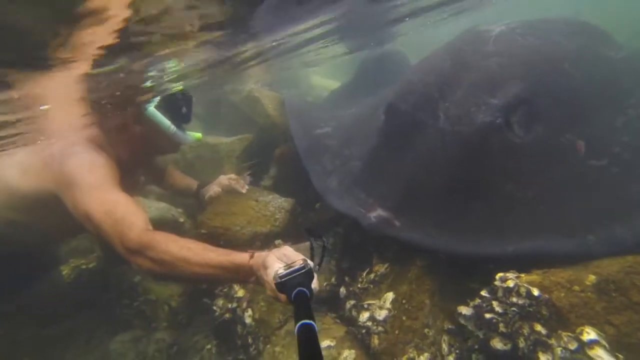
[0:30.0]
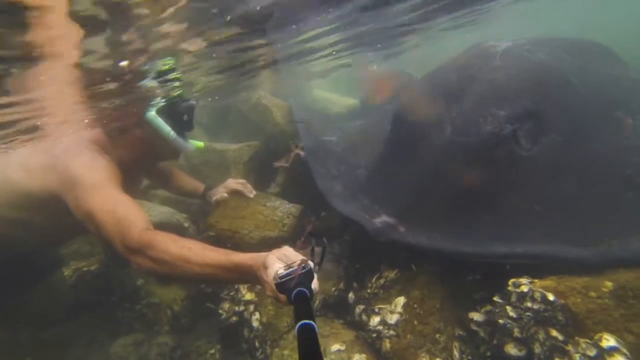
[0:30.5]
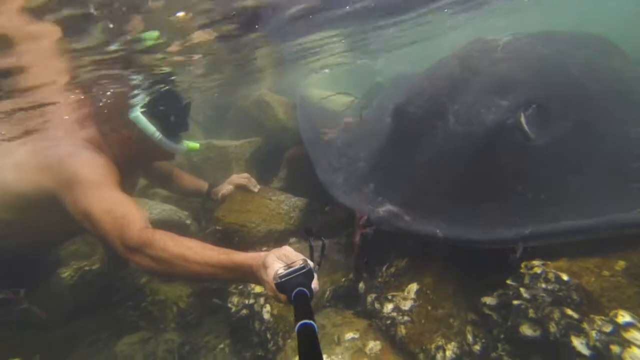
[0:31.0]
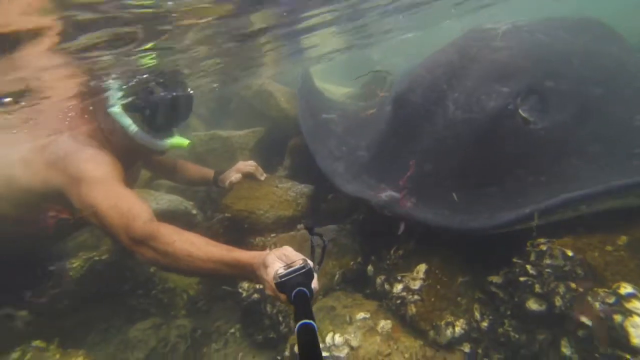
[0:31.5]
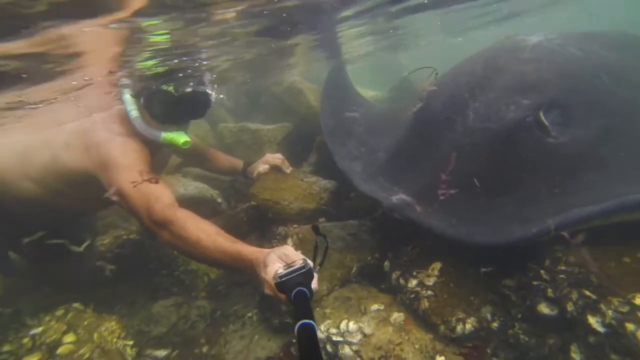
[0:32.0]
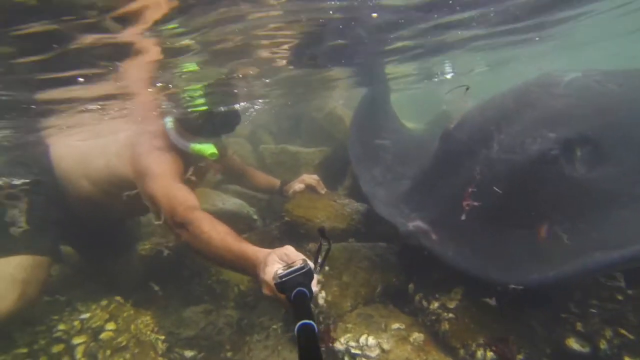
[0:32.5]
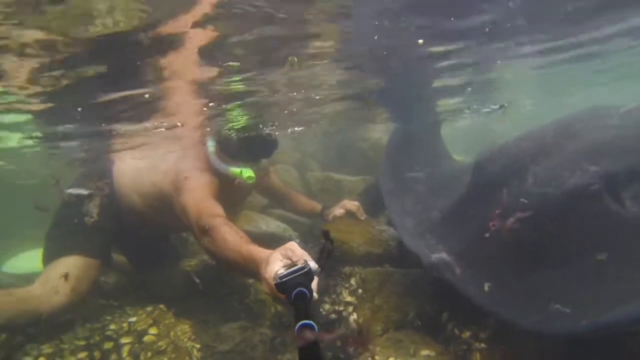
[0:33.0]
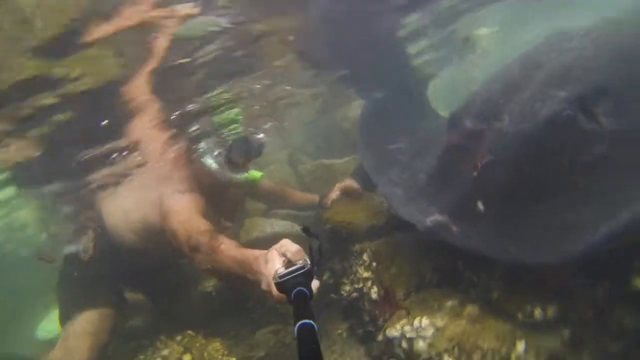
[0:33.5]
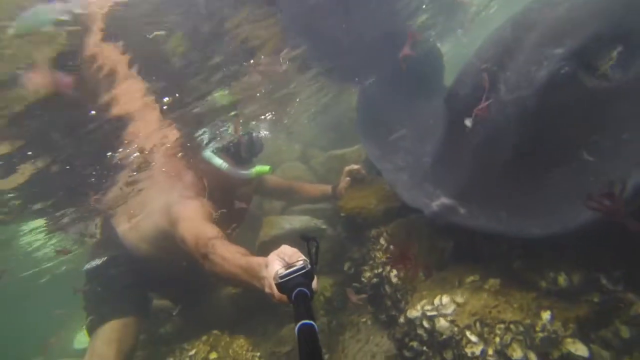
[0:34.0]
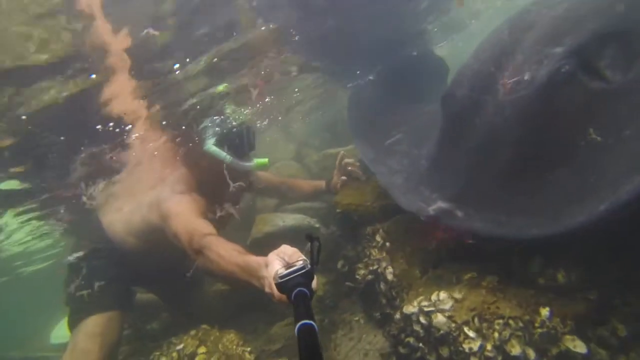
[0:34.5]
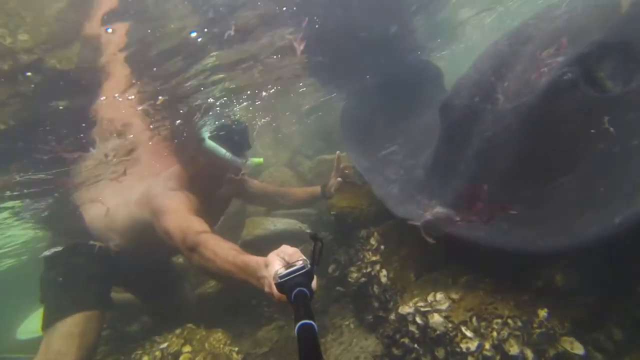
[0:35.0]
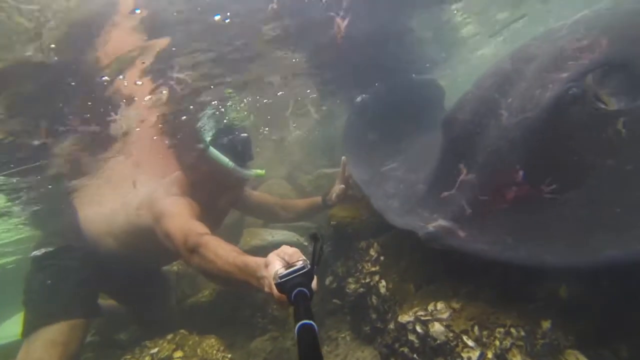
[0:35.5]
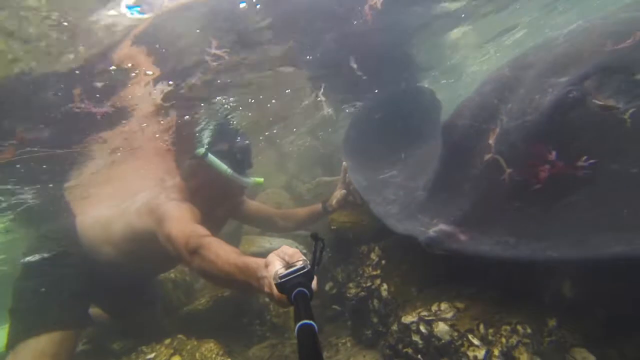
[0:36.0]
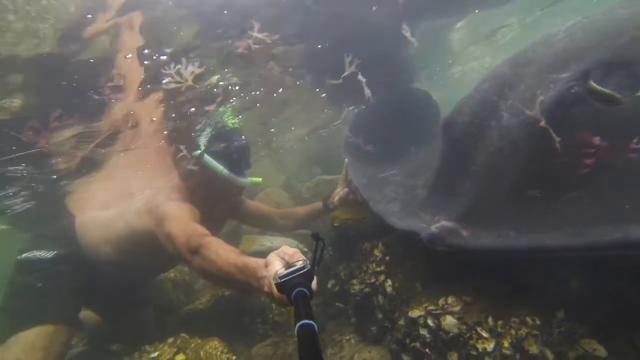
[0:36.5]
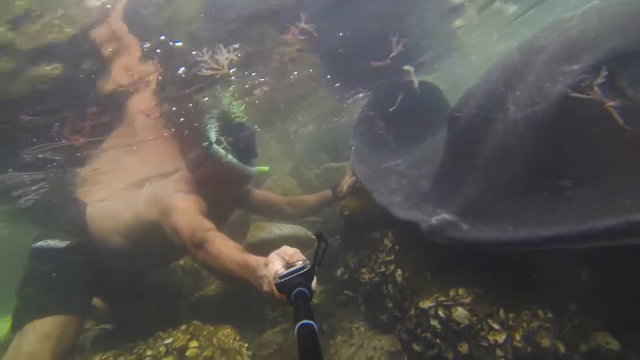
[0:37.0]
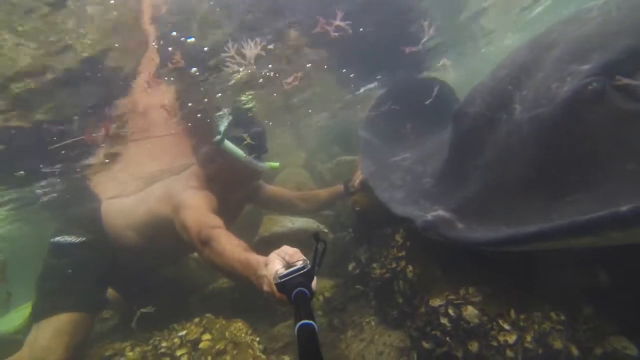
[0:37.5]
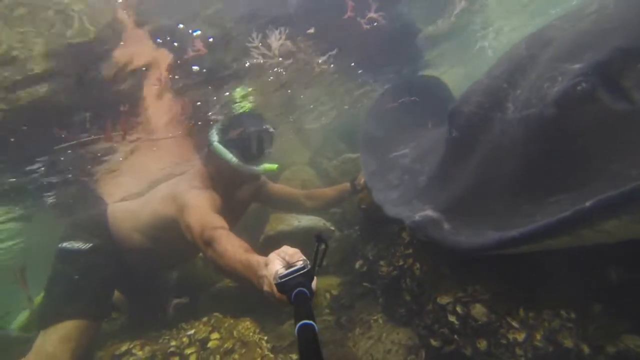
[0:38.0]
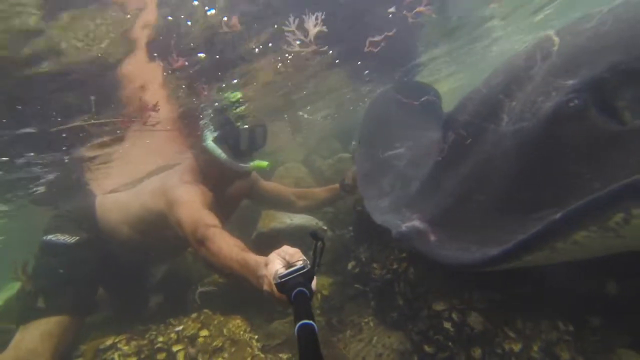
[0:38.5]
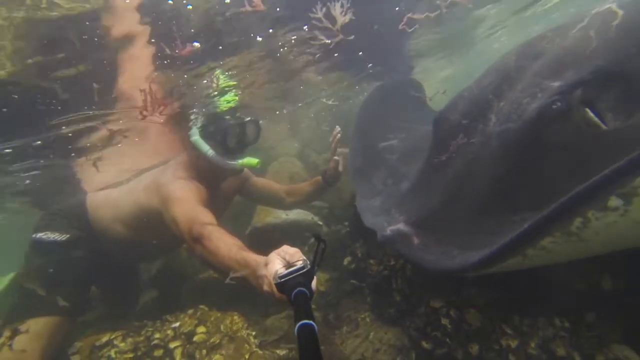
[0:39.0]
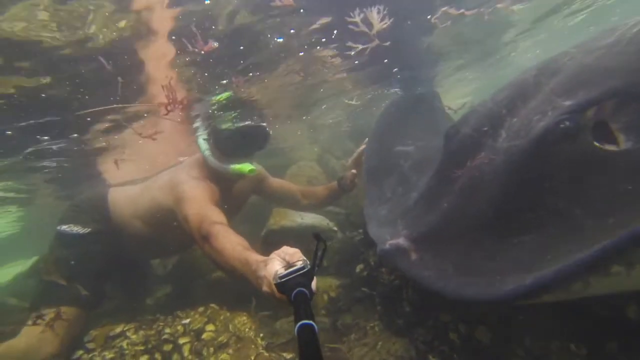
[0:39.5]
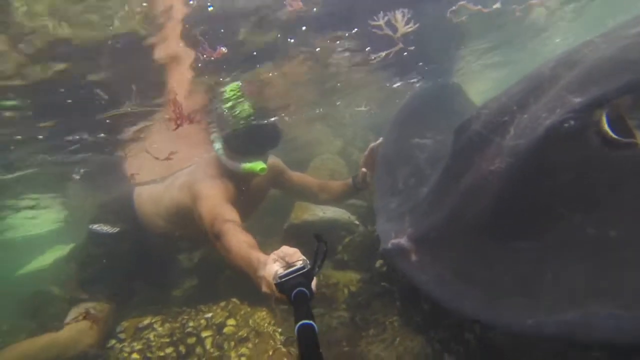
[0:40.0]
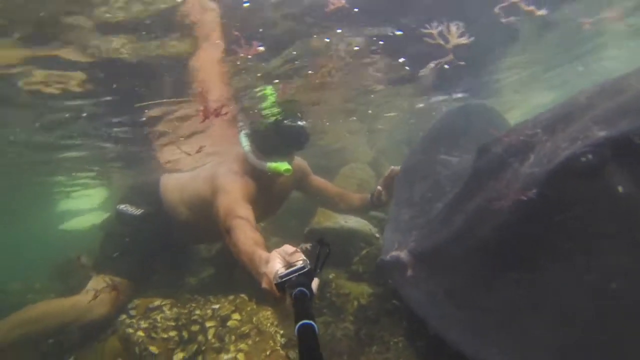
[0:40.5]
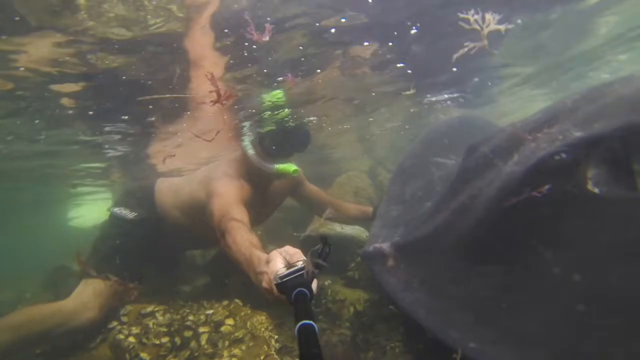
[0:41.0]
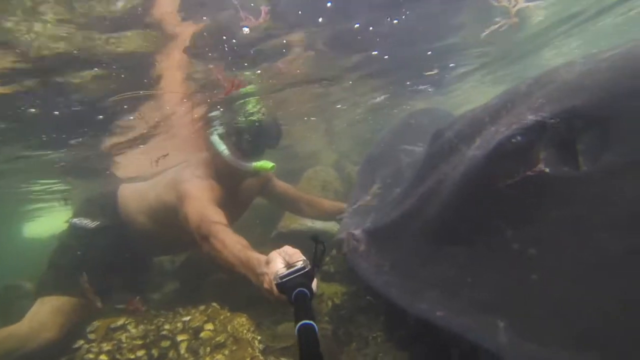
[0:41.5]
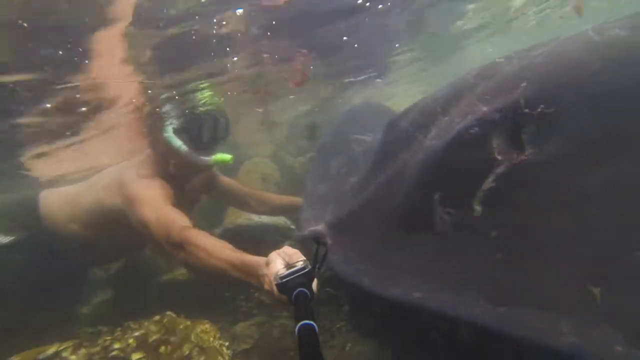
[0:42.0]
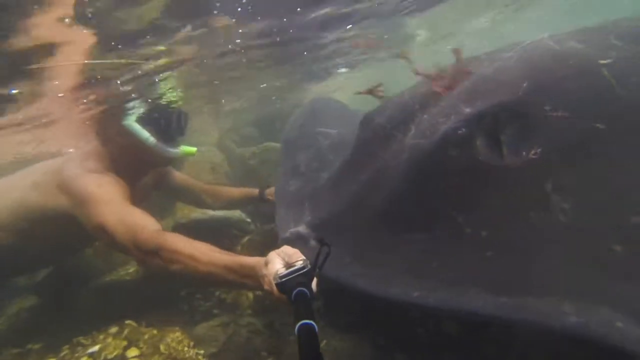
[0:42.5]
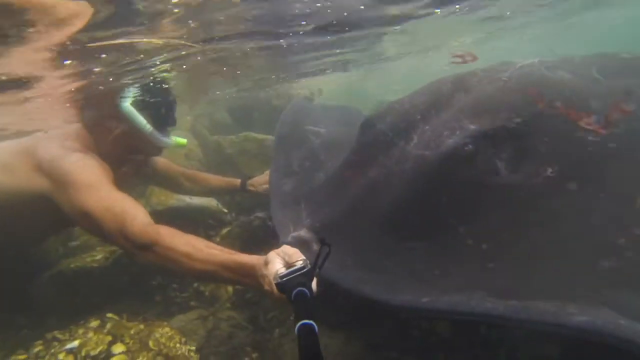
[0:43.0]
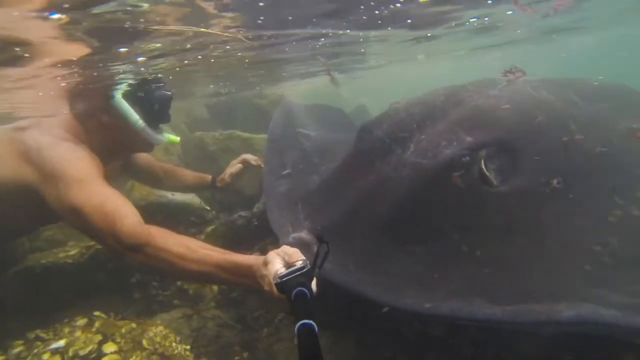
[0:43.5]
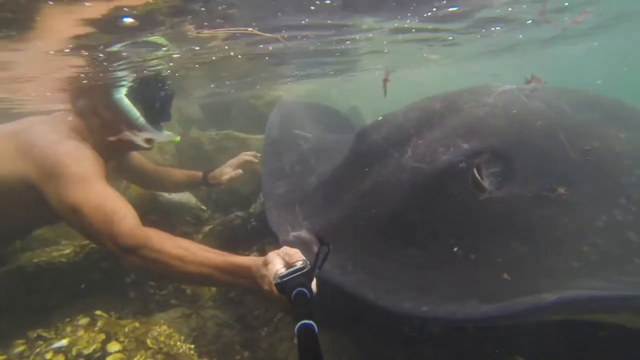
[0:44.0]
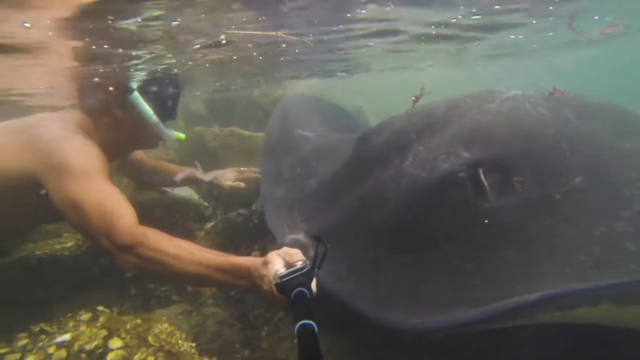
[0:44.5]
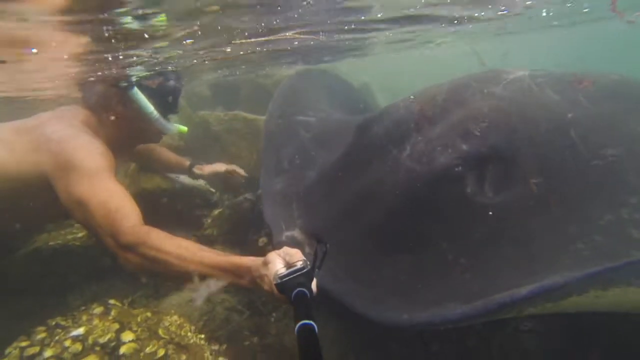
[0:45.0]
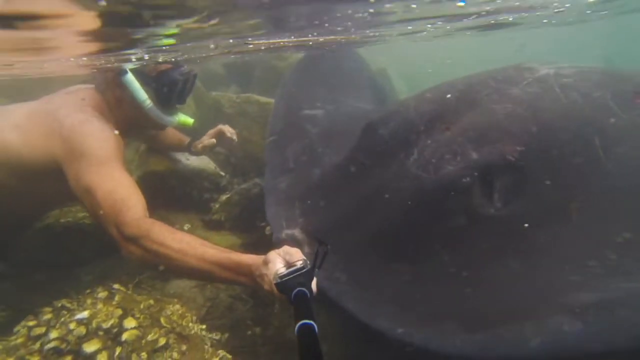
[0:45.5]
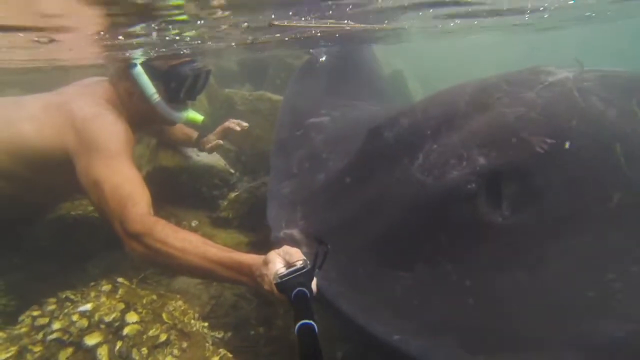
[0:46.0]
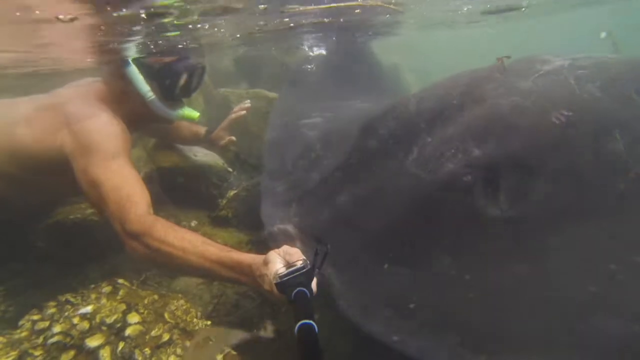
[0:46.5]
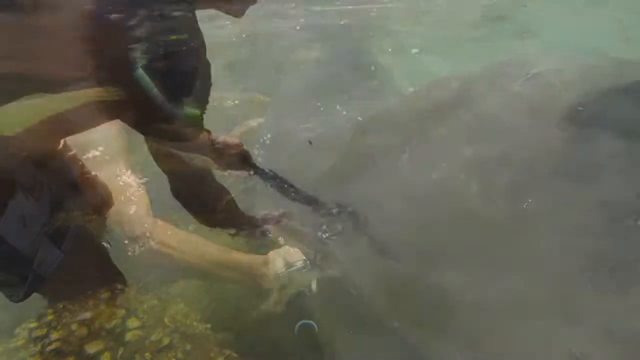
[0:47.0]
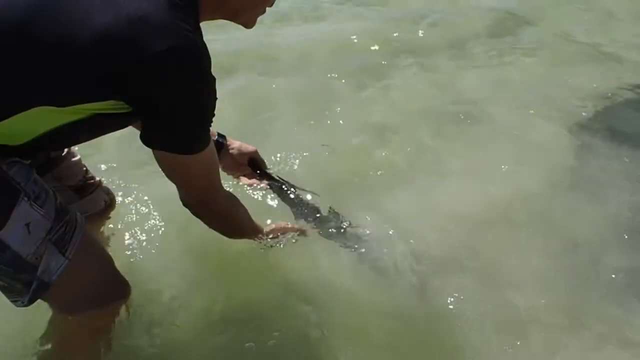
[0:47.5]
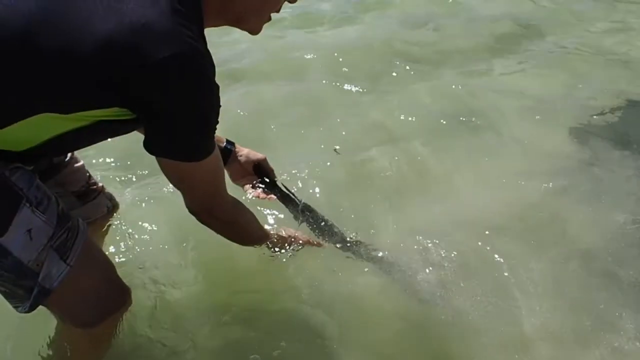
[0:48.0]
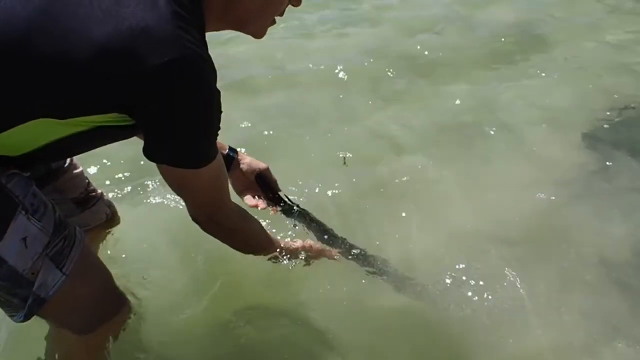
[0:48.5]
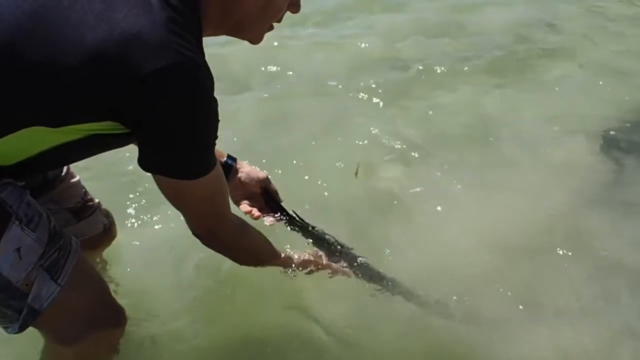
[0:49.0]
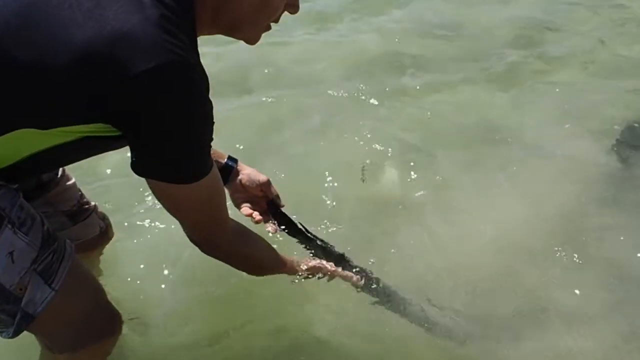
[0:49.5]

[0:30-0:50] Underwater, this man, maybe the same man, is shirtless. He holds a camera in his right hand on a selfie stick to sort of help him film himself and the stingray. His left hand holds onto a square-shaped bit of rock or debris in the water. He seems to turn to his right, revealing a snorkel that is black with a green mouthpiece area and a tube of sort of plasticky see-through gray. He wears black swim shorts. He adjusts his stick to get a different angle of the stingray as it sort of rests against him. Then there is a top-down view again, with the previous man looking downward into the water. The stingray is resting on a bunch of sort of dark brown square blocks in the water.